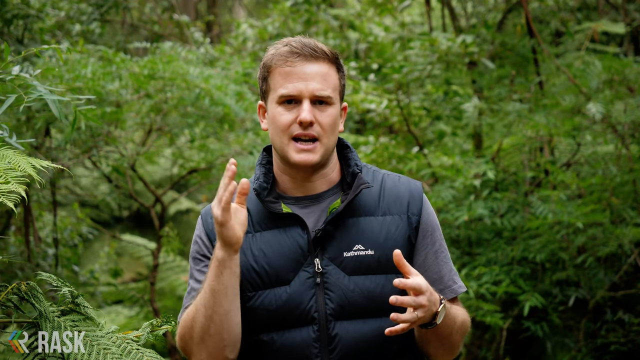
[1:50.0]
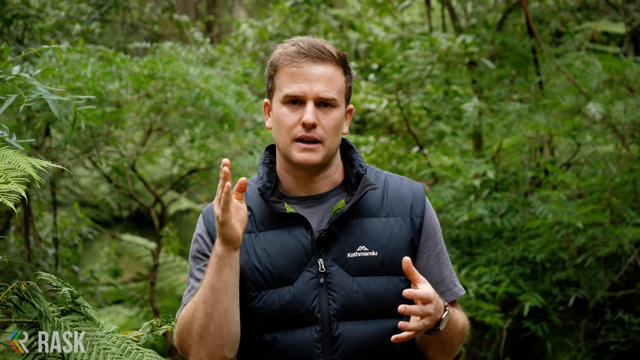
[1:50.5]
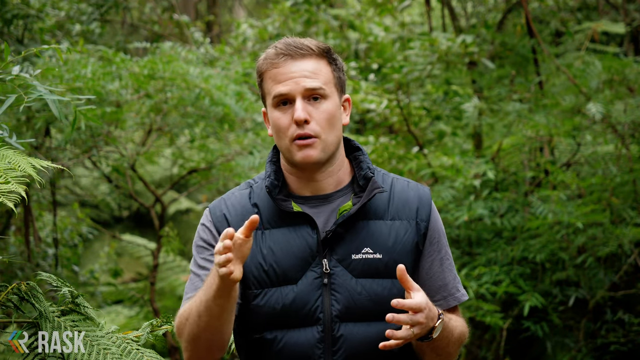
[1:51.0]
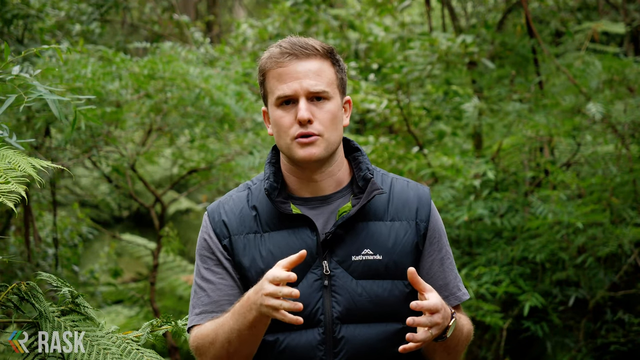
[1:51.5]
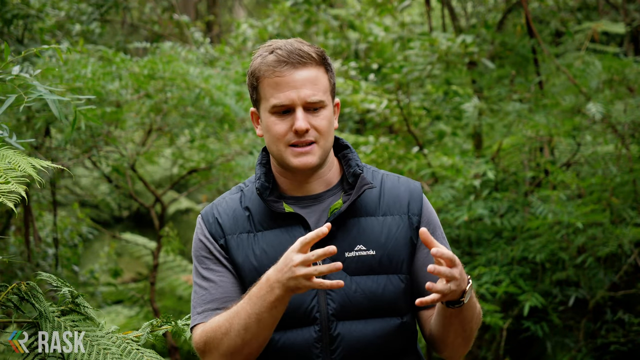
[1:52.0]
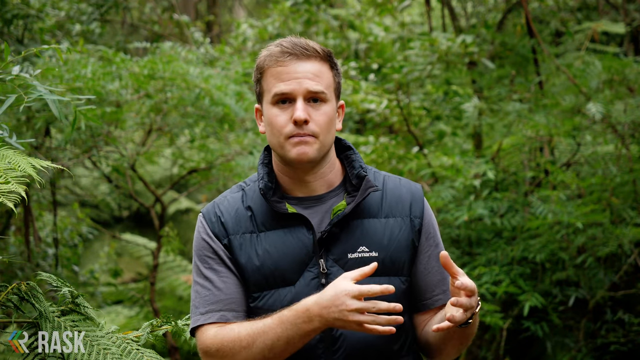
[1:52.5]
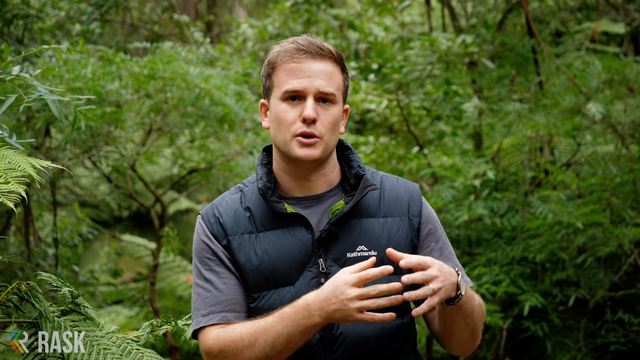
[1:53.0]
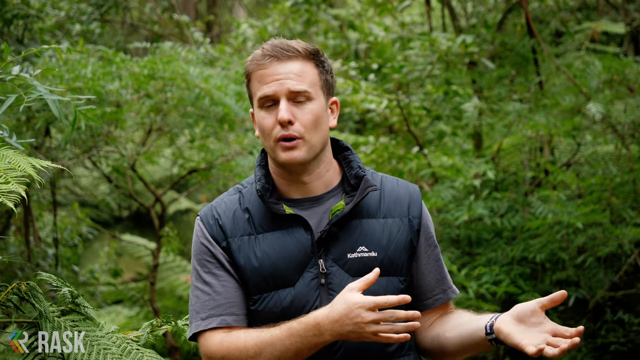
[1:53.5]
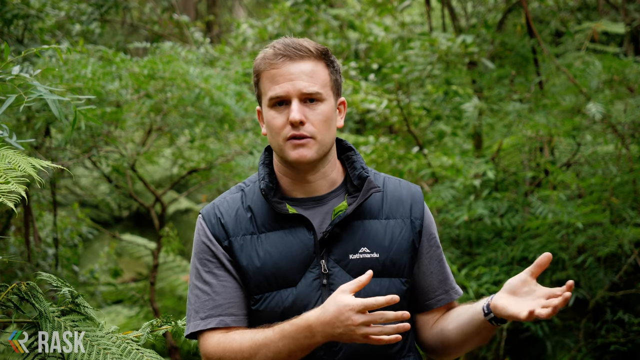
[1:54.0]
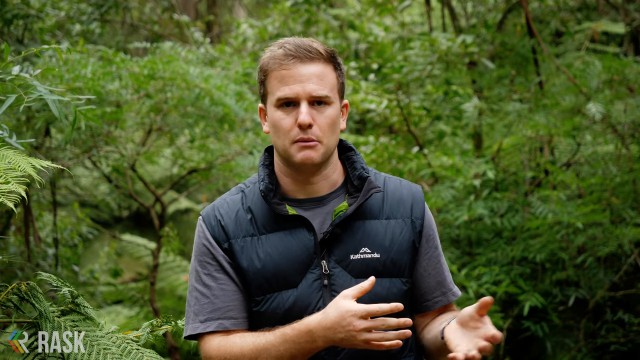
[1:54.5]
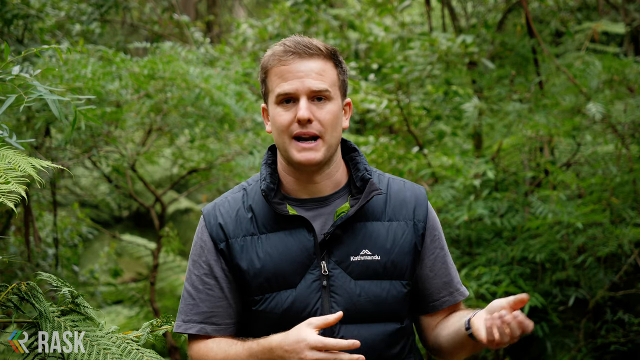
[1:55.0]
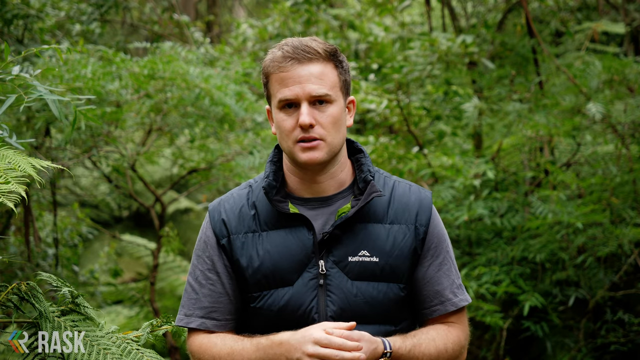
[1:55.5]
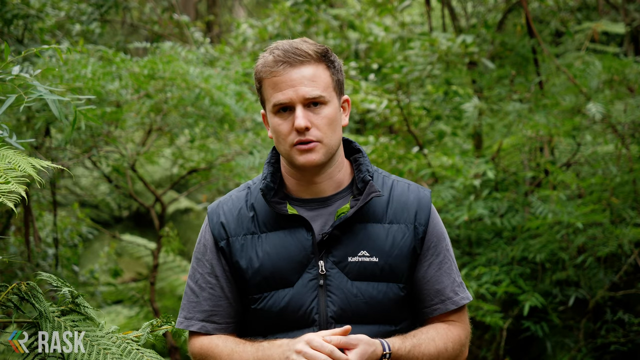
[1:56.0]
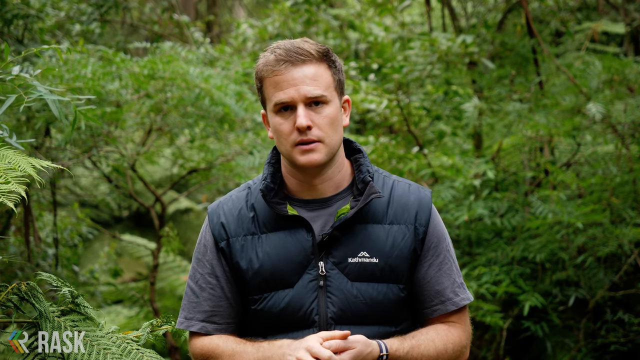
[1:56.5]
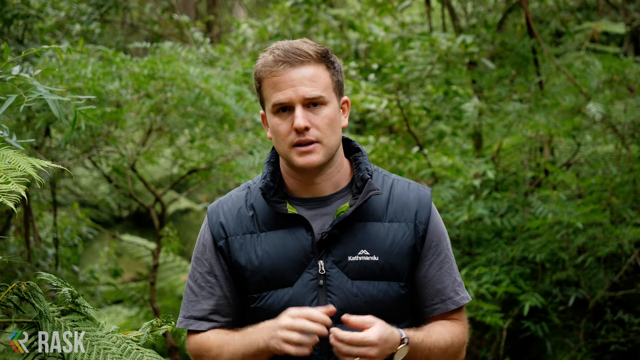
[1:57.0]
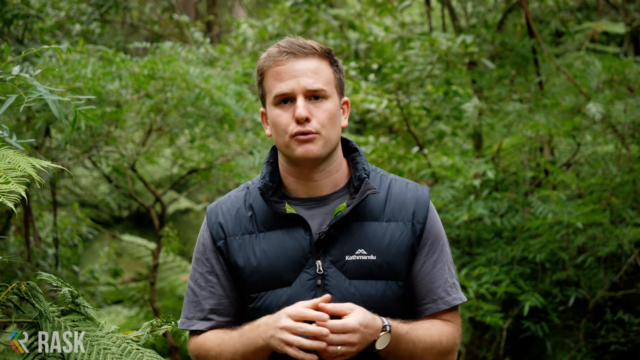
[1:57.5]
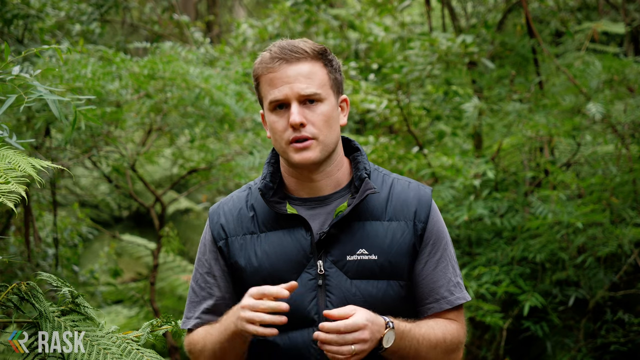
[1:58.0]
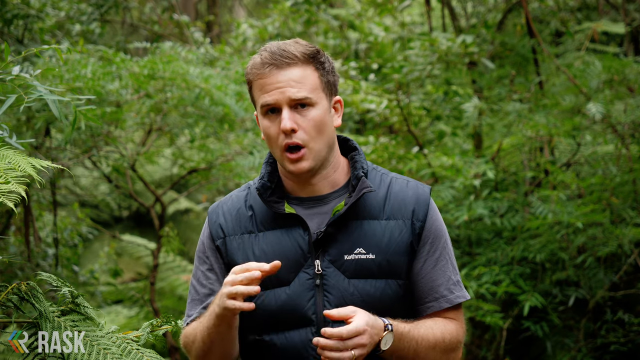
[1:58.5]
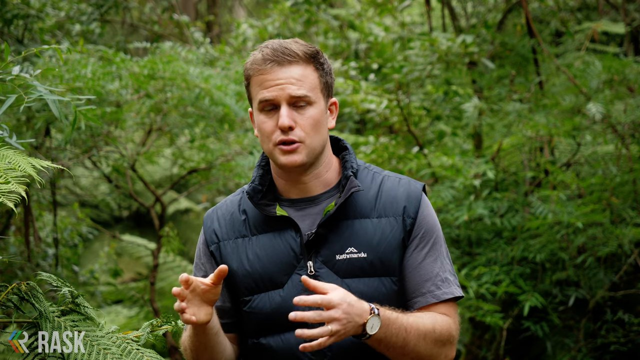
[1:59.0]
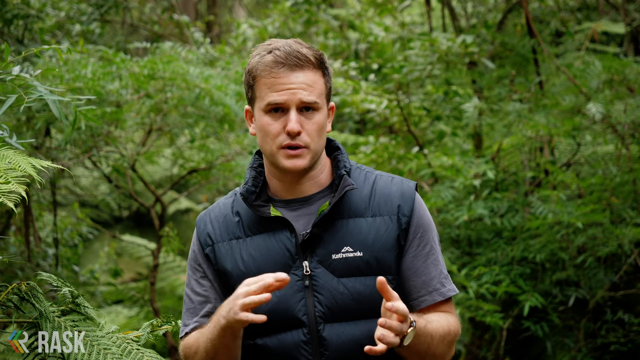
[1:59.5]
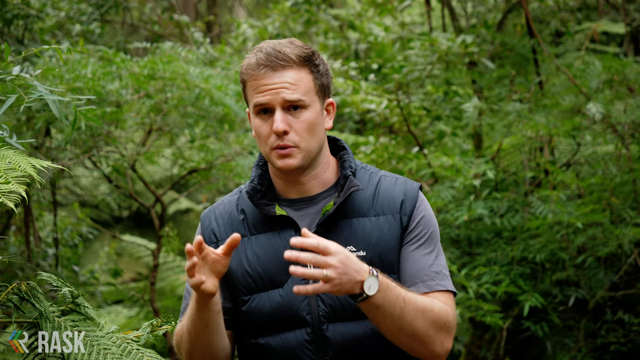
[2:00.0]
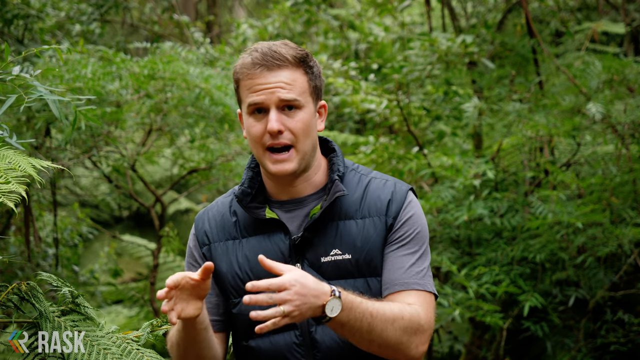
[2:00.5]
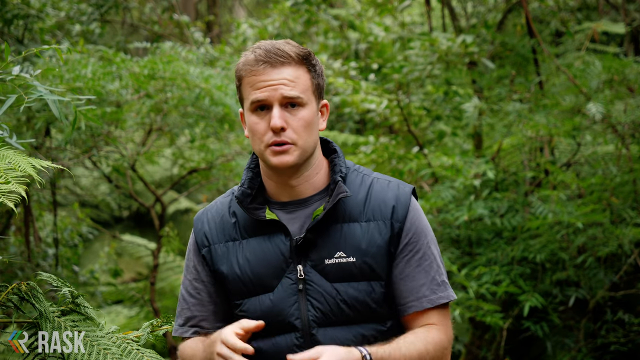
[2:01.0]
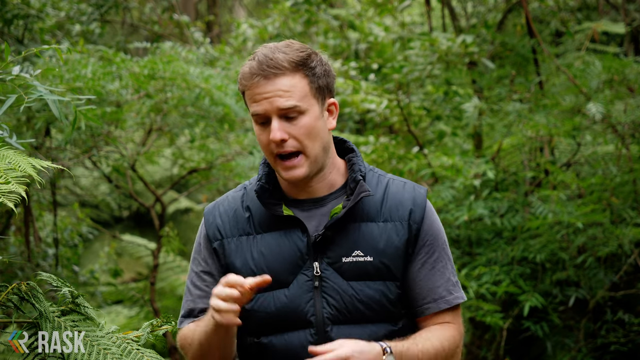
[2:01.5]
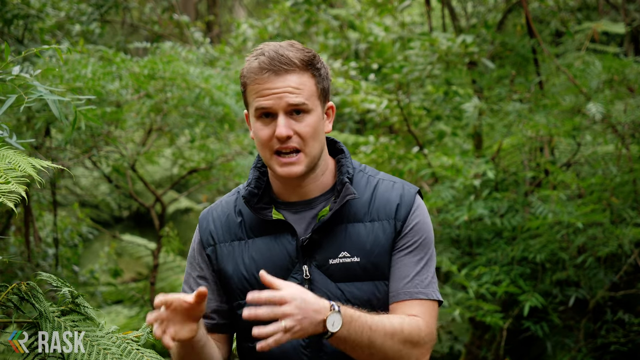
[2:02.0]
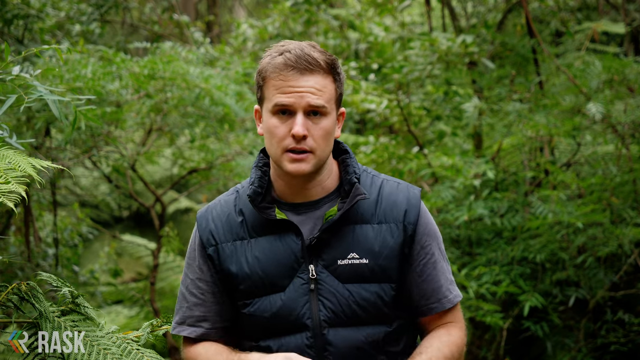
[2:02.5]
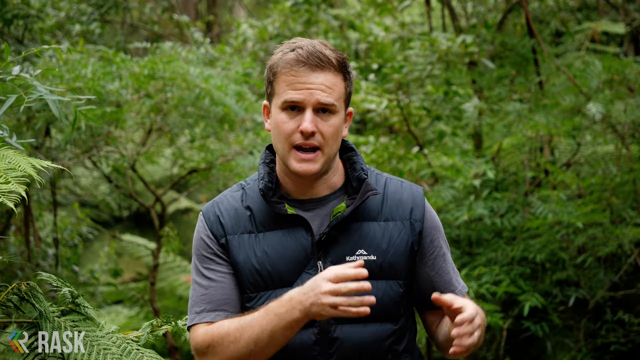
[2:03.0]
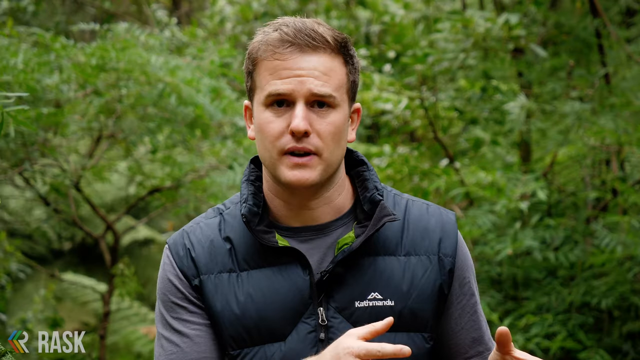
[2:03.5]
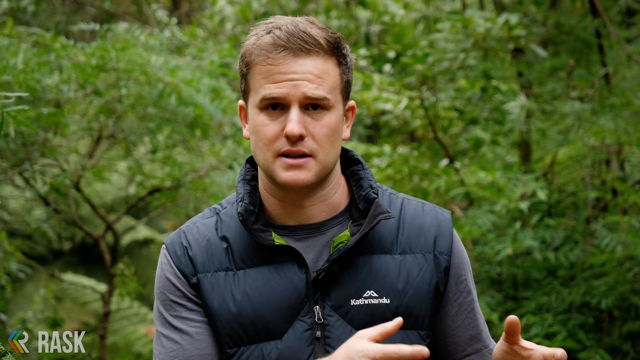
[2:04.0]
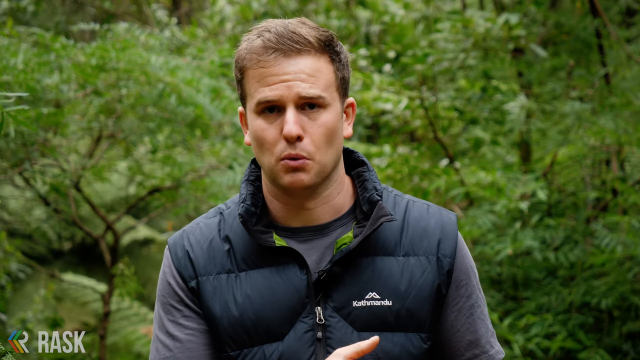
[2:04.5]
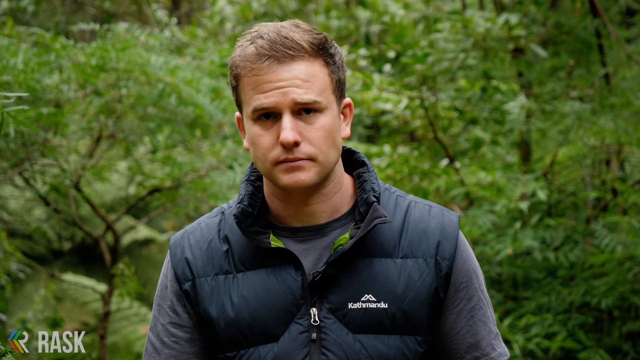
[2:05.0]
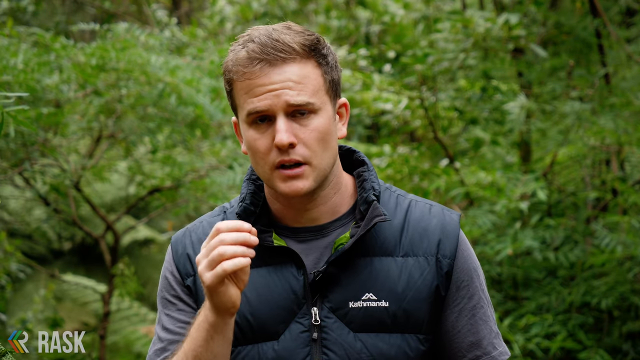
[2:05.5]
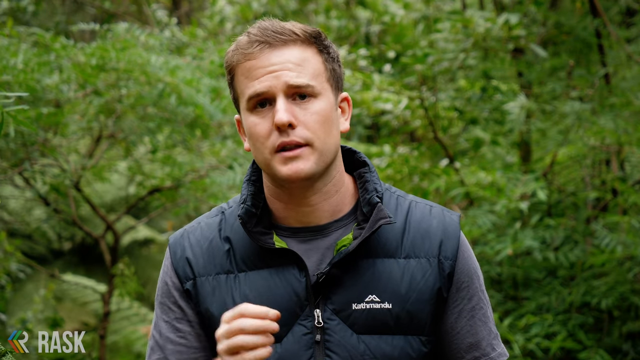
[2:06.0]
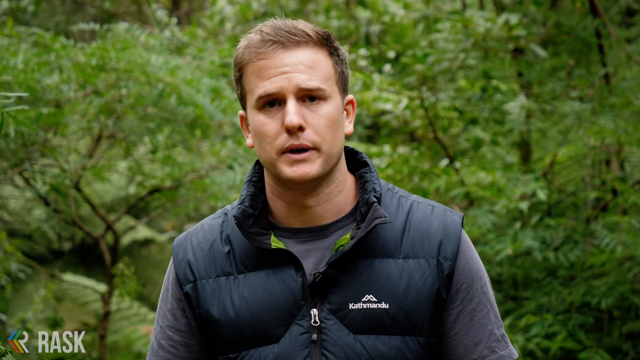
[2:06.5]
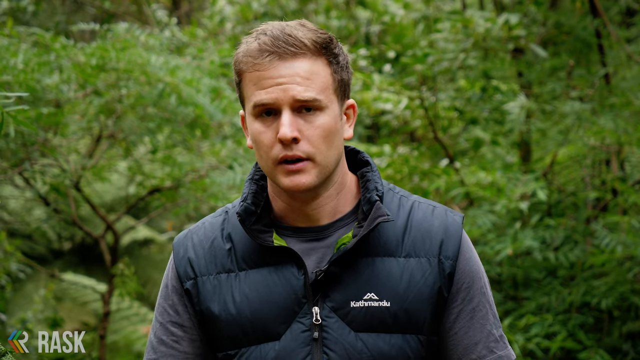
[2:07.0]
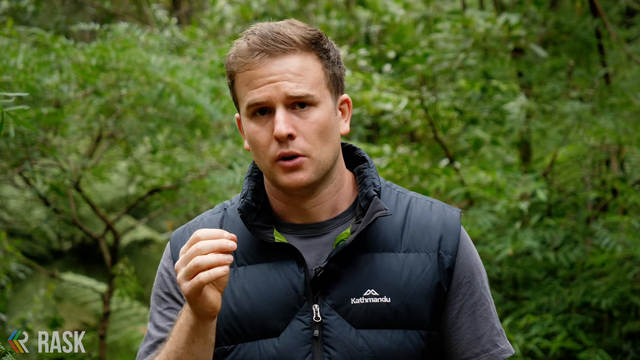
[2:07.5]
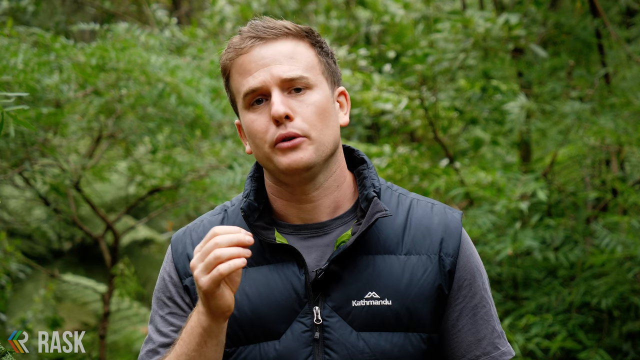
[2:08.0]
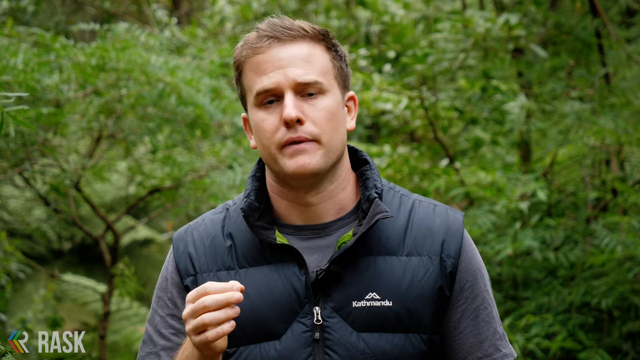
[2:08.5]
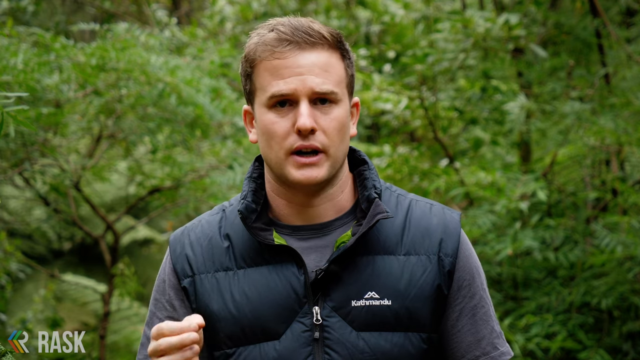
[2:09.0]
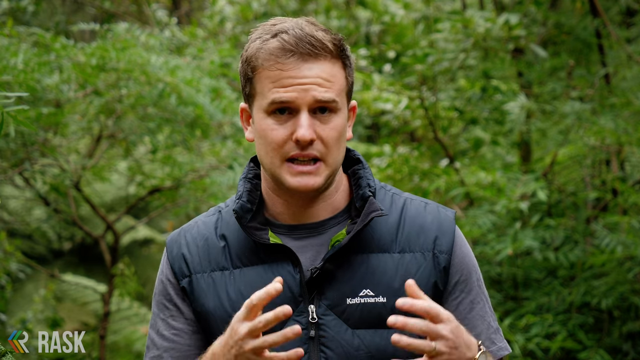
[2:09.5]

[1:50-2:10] The coach continues explaining with his hands. He points his hands to his left-hand side, puts his hands together, twists his fingers together, and looks straight at the camera. He uses his right hand and then his left hand to make points. Behind him are thick, lush green bushes; nothing else is visible on the screen.